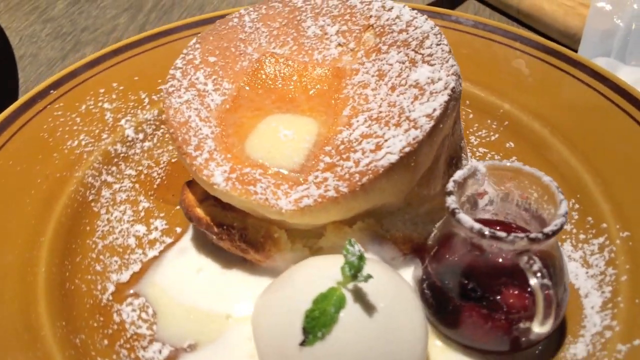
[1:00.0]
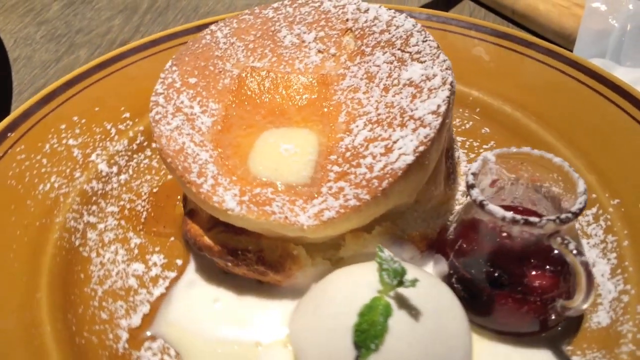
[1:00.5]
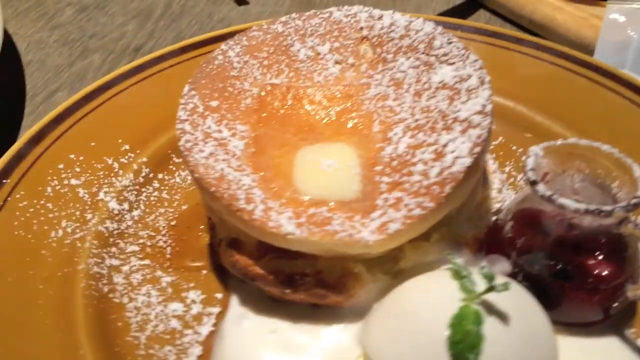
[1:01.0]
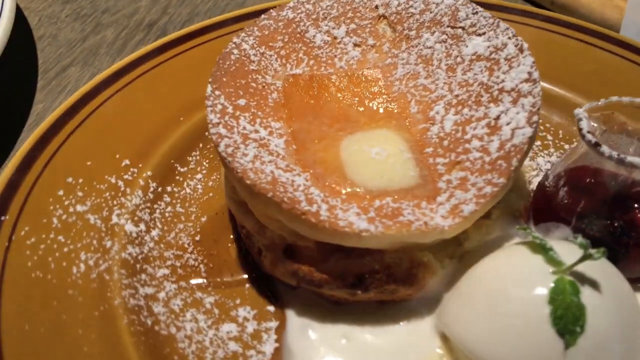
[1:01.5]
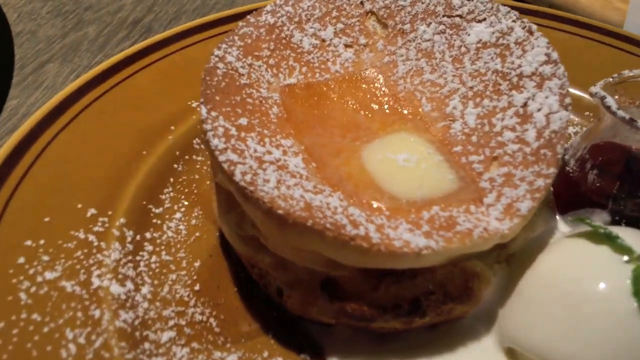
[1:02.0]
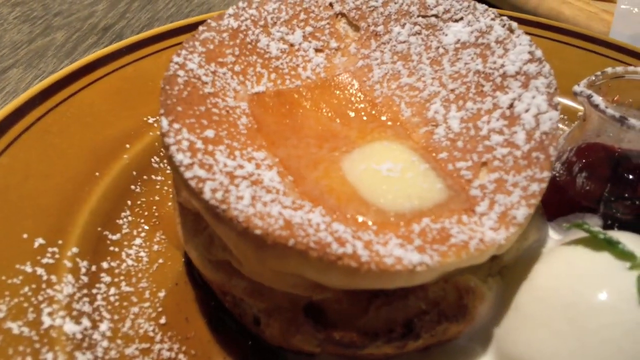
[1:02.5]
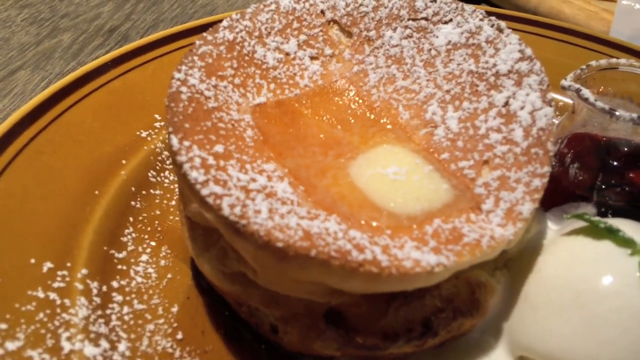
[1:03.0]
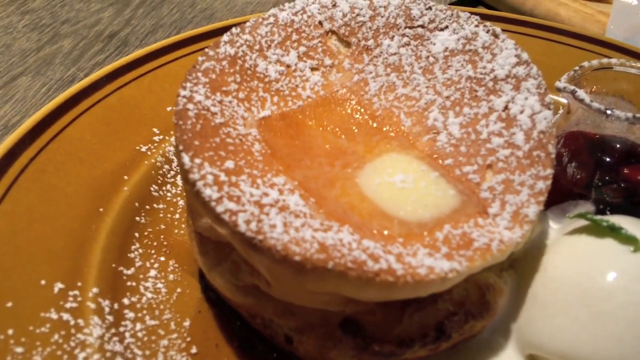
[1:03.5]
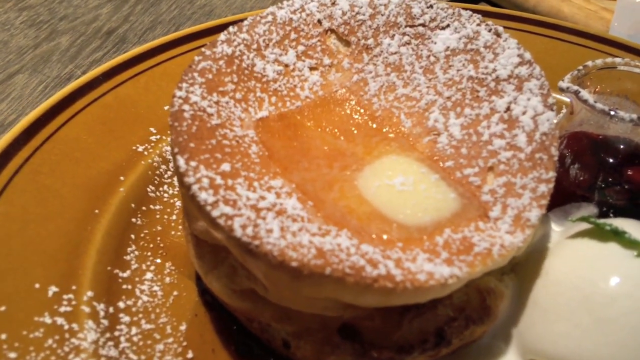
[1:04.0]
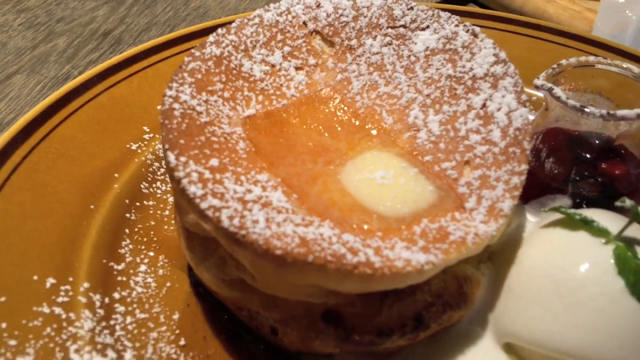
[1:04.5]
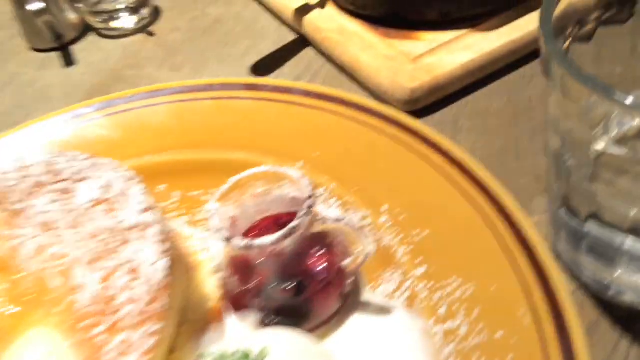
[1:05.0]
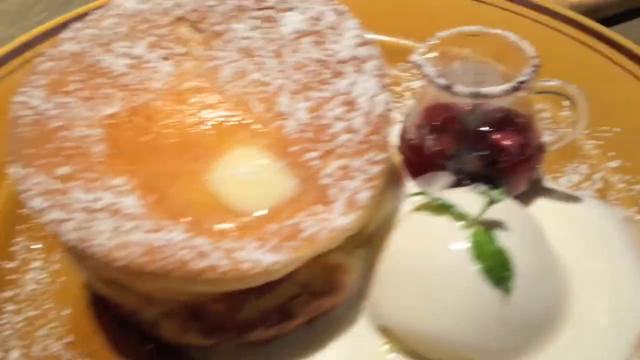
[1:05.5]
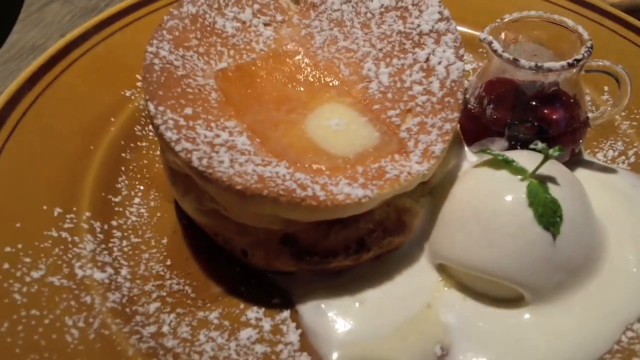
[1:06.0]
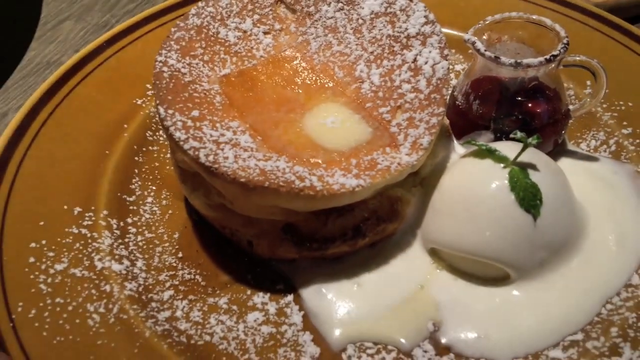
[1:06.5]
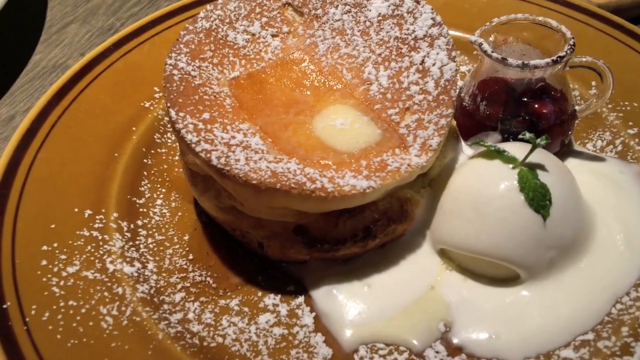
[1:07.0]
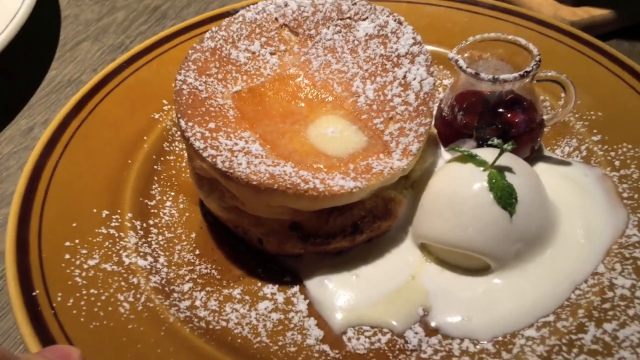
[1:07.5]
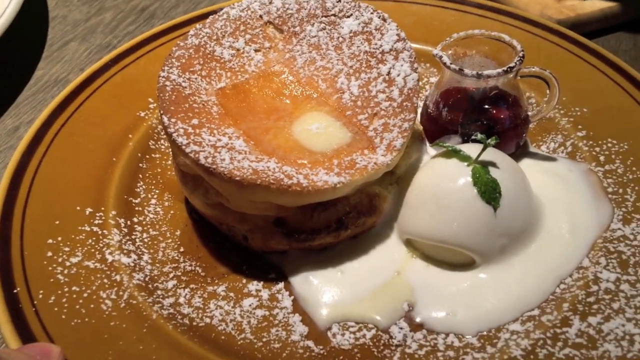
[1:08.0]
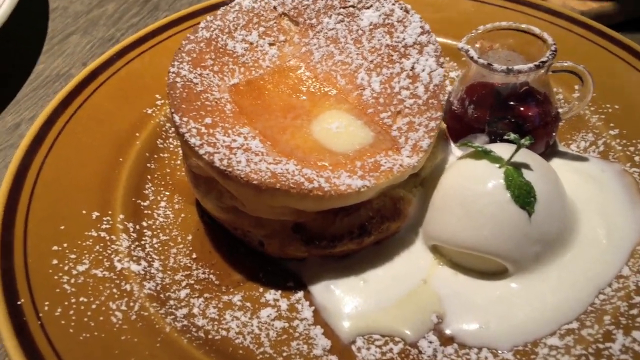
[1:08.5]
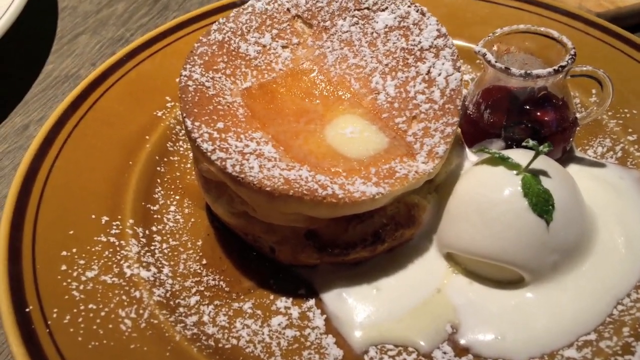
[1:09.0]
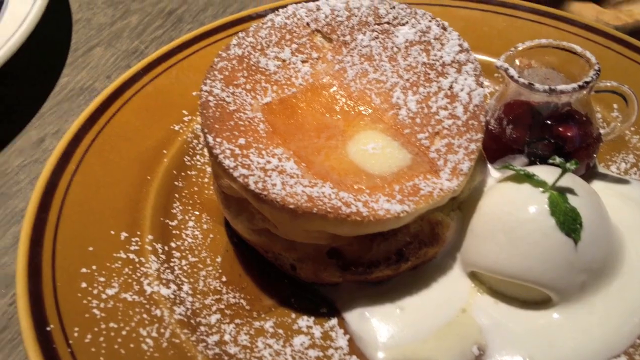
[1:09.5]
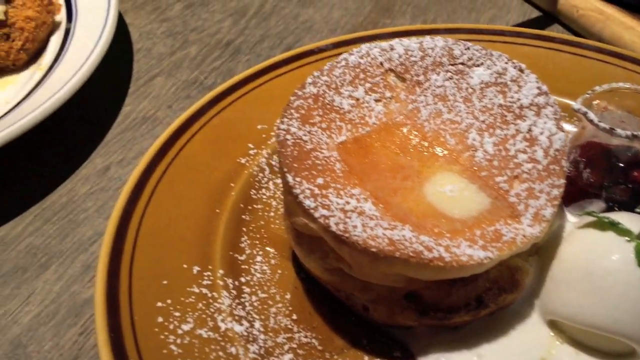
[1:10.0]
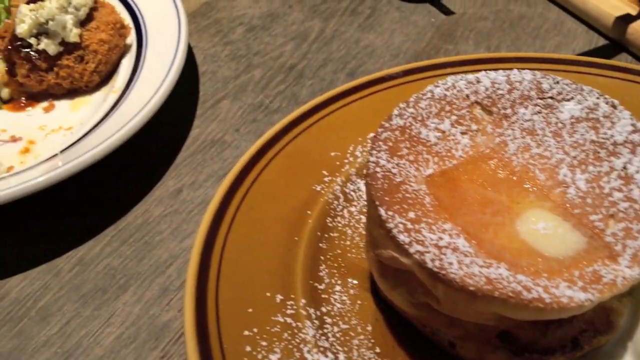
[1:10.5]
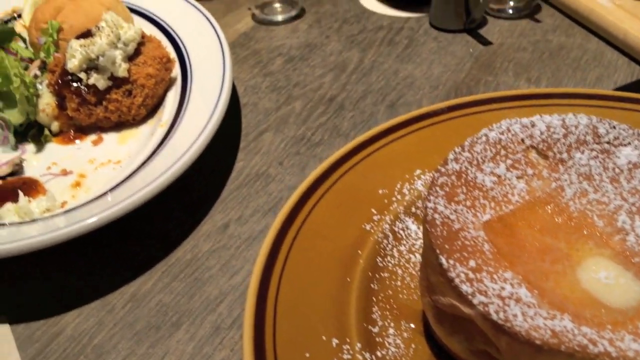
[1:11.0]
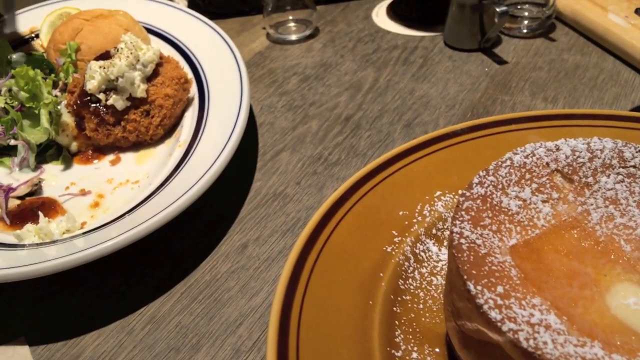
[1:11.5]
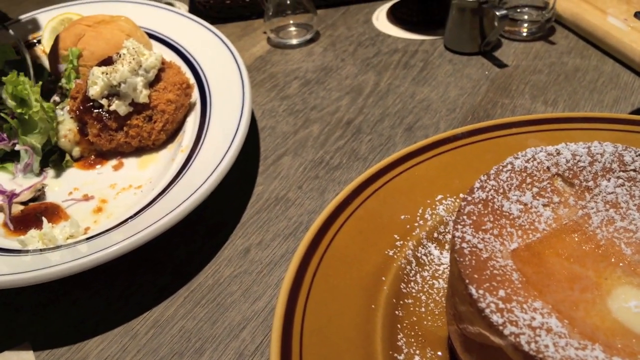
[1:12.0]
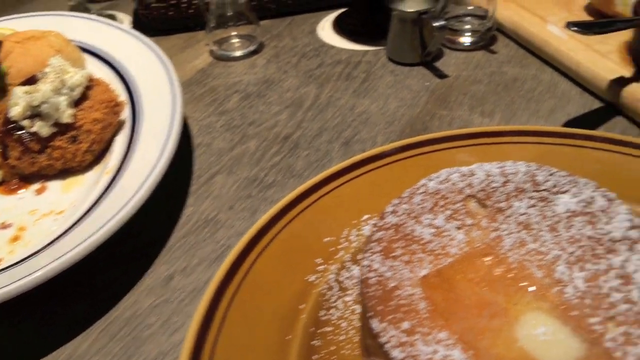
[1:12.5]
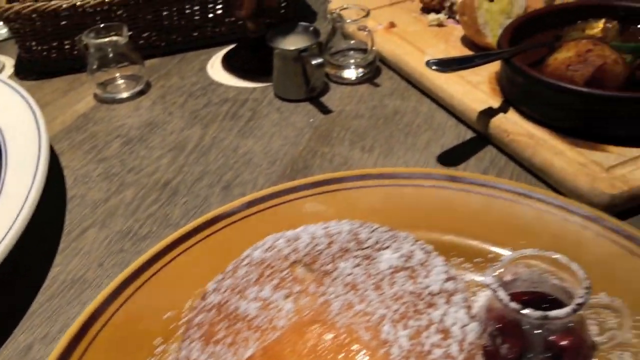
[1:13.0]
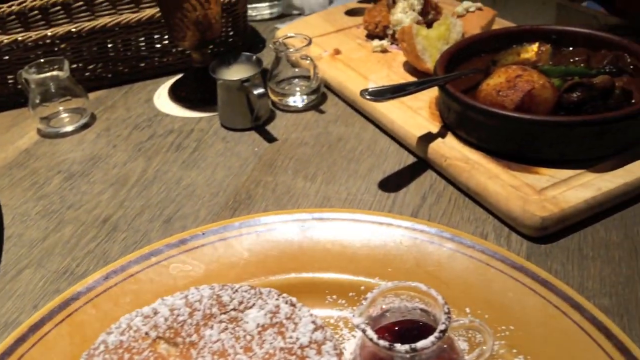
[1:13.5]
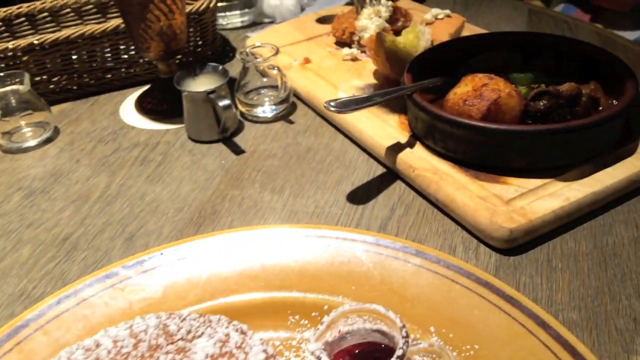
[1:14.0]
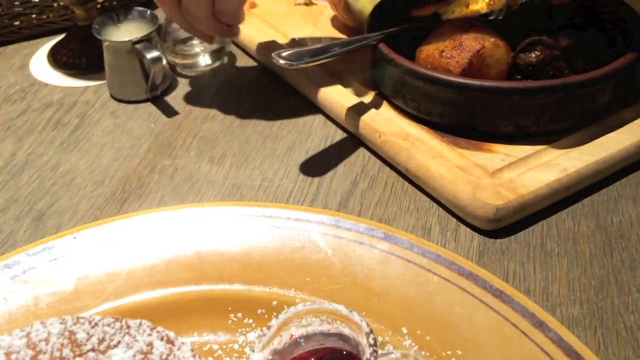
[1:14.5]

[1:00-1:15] The dessert is shown, and the camera pans around the table to the first and second dishes. There seem to be other people at the table, although they are not seen. Hands put down and adjust the plates so they can be eaten at the table. The food looks delicious and seems to be hot. Another close-up of the dessert shows the vanilla ice cream has melted a bit more and is drizzled on the plate. From this view, an emulsified cherry or other red fruit is visible inside a little pitcher used to drizzle over the dessert, and the powdered sugar is also visible. The plate is a brownish orange with rings around it; it looks almost like the first plate but is orange instead of white.